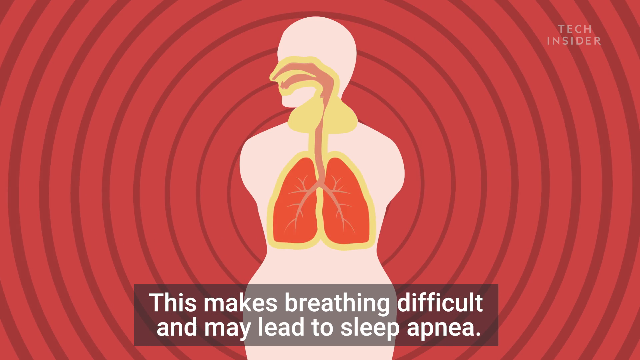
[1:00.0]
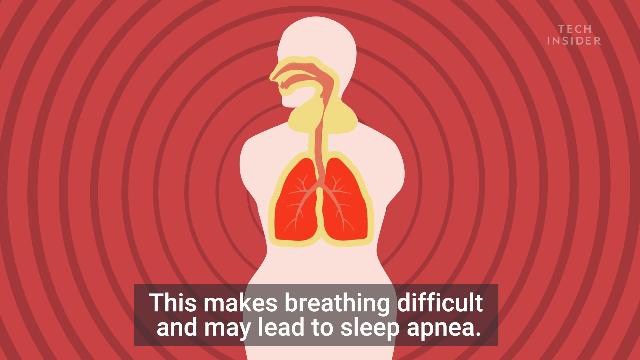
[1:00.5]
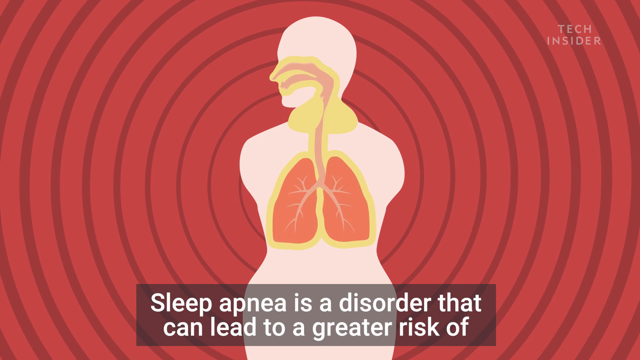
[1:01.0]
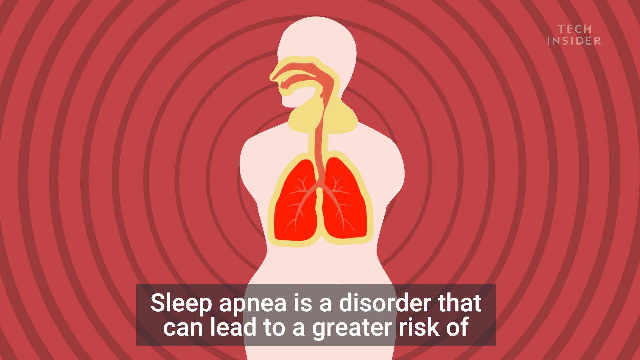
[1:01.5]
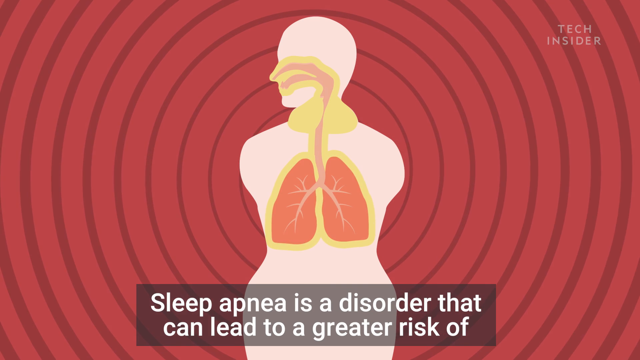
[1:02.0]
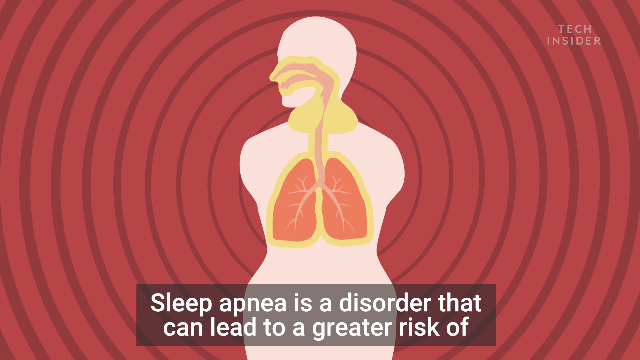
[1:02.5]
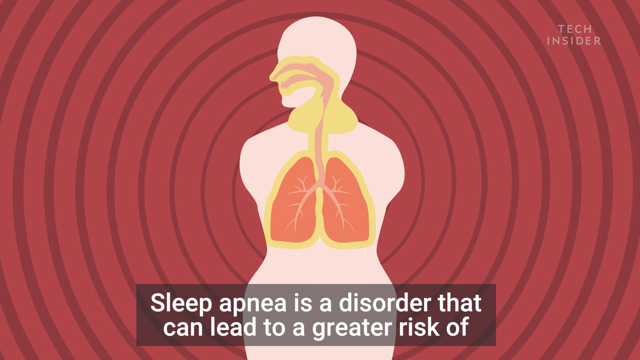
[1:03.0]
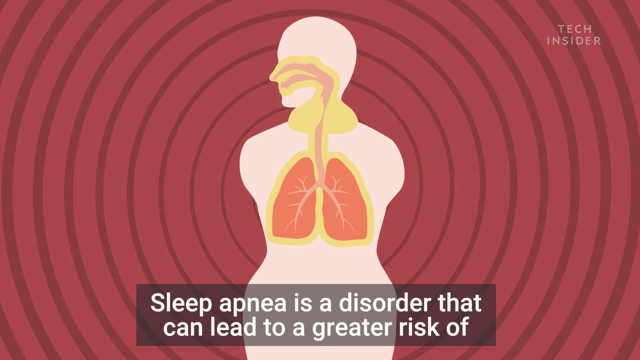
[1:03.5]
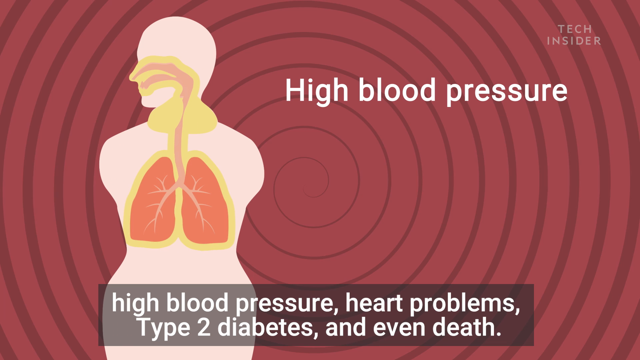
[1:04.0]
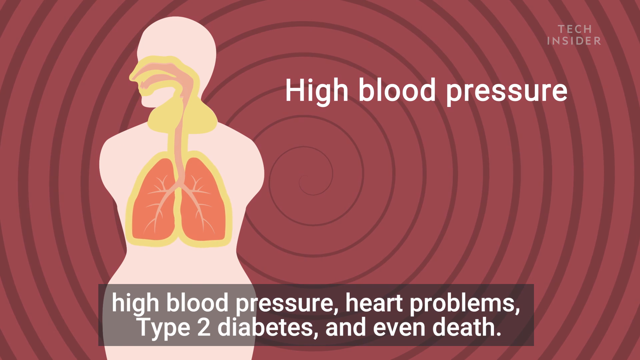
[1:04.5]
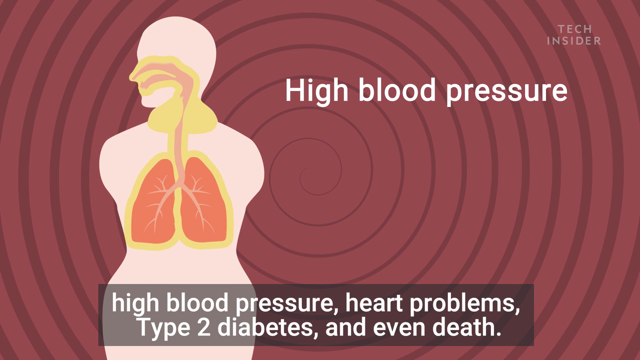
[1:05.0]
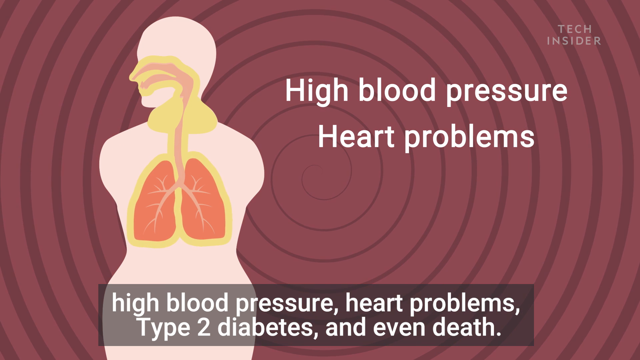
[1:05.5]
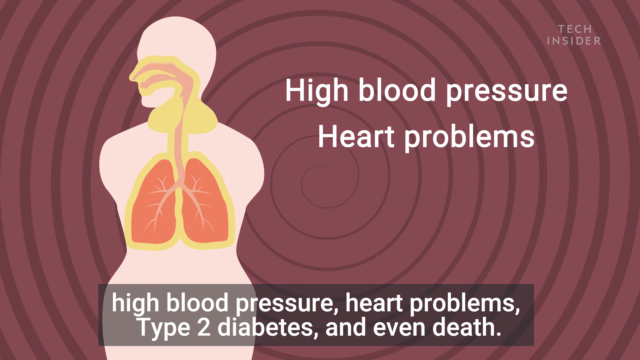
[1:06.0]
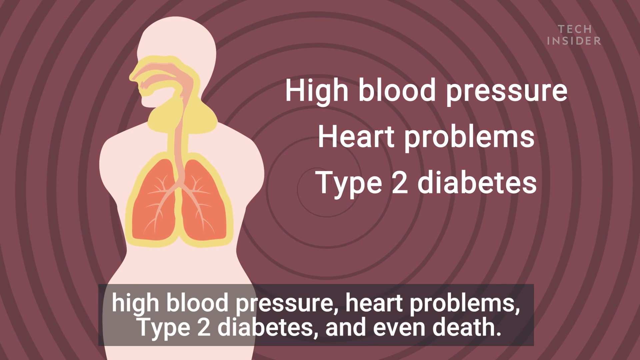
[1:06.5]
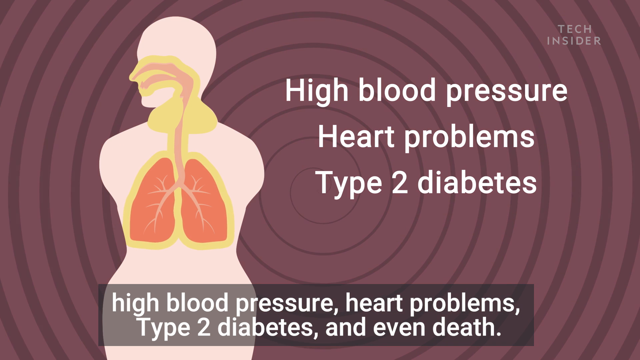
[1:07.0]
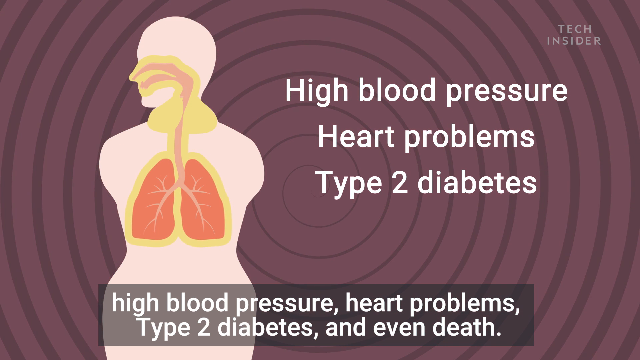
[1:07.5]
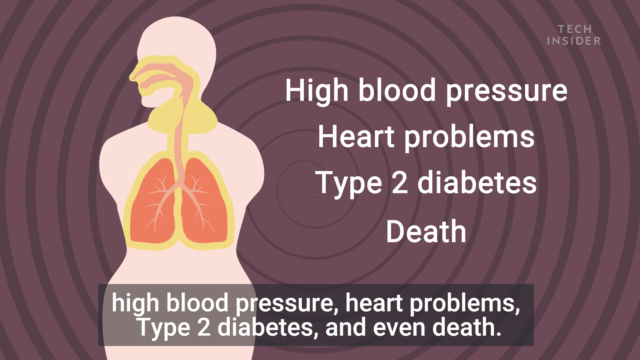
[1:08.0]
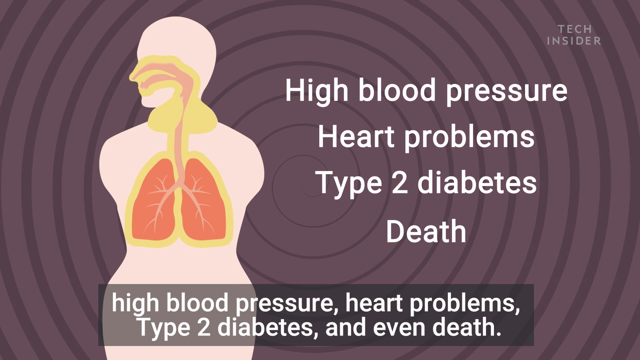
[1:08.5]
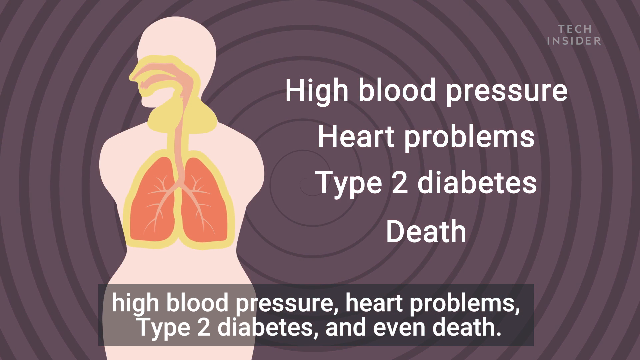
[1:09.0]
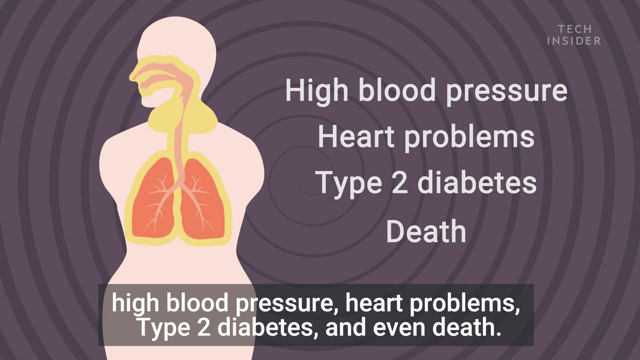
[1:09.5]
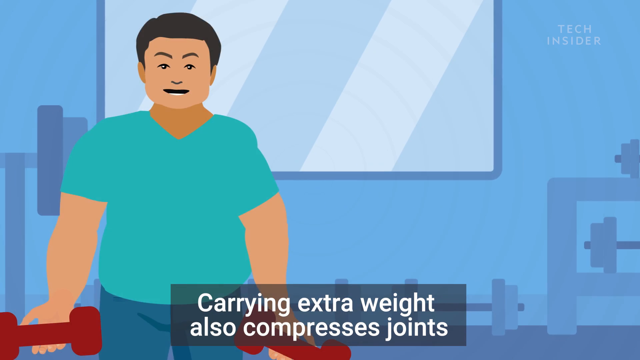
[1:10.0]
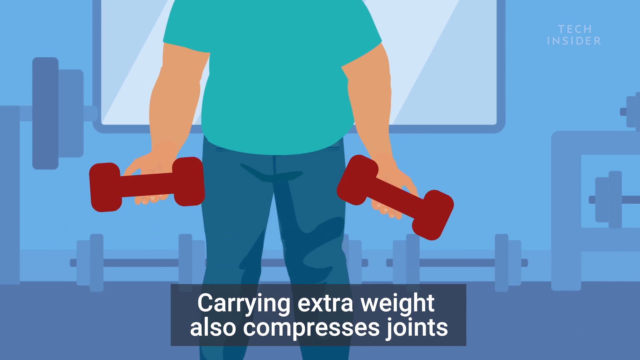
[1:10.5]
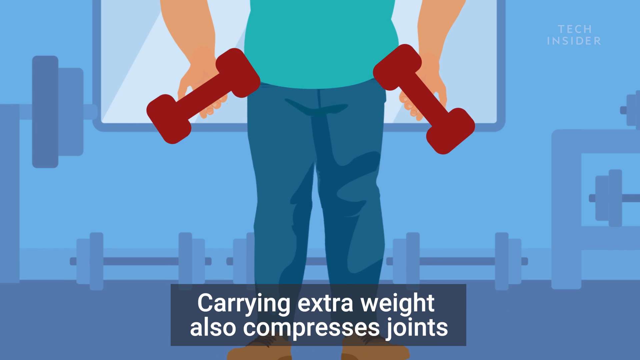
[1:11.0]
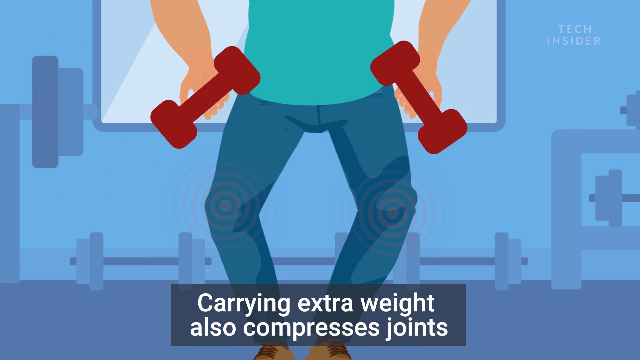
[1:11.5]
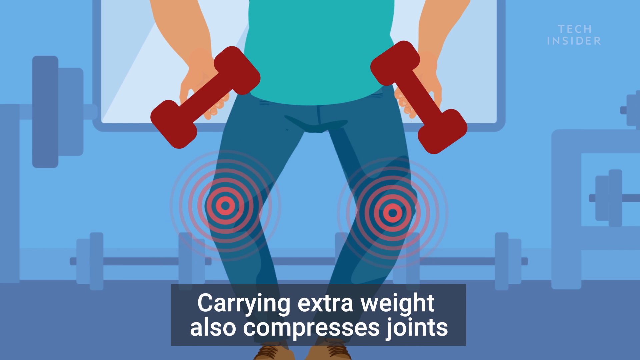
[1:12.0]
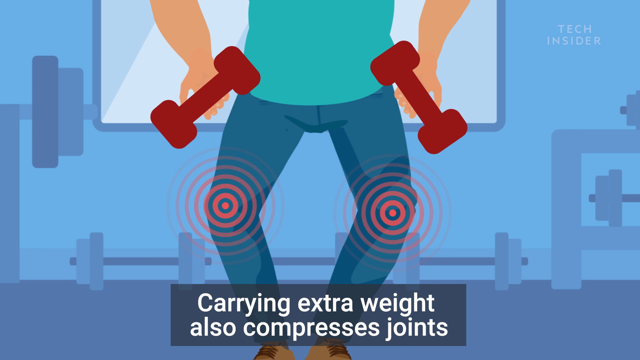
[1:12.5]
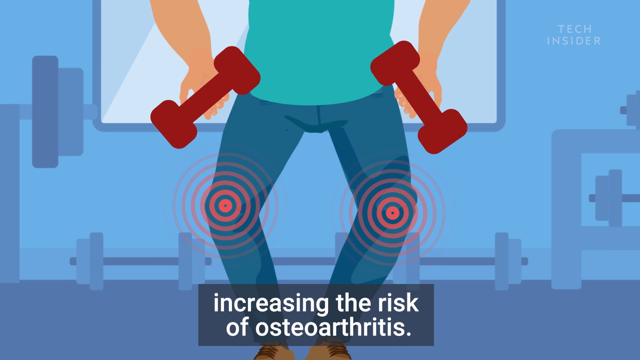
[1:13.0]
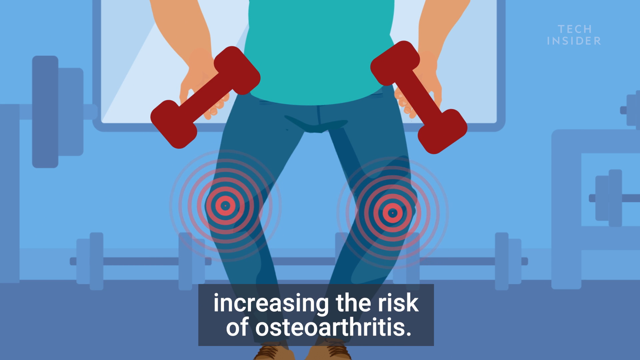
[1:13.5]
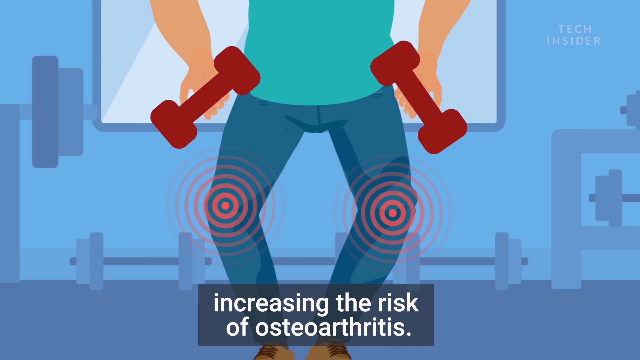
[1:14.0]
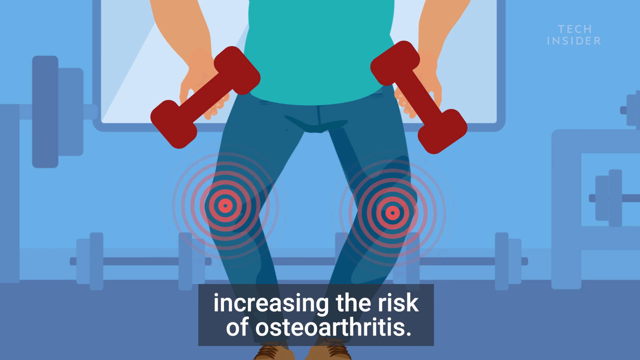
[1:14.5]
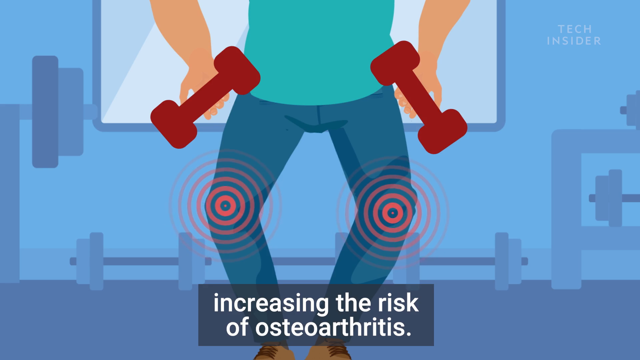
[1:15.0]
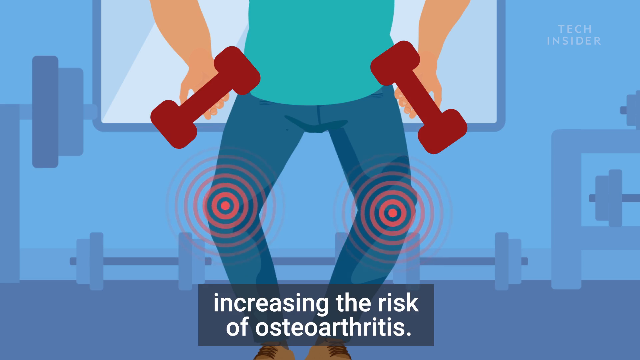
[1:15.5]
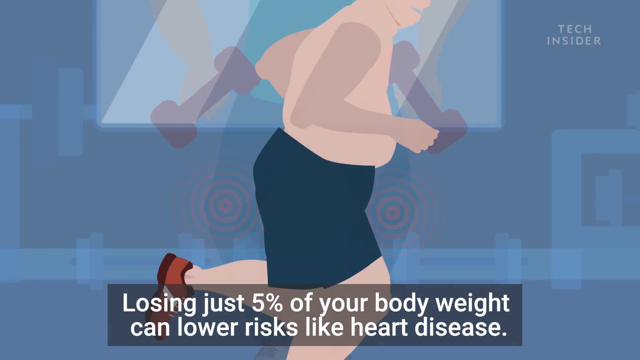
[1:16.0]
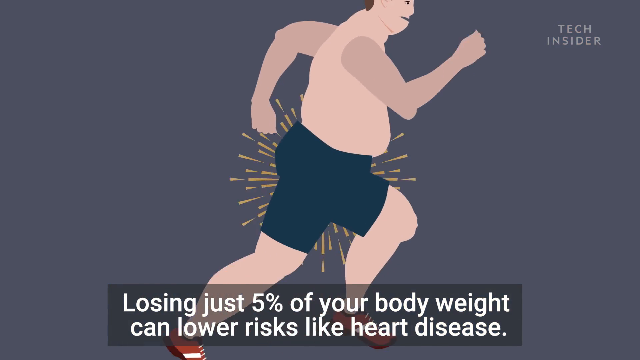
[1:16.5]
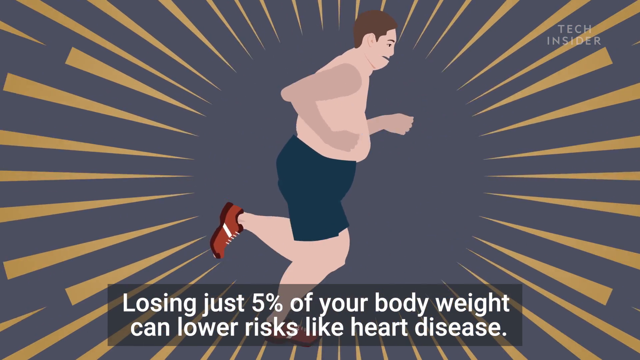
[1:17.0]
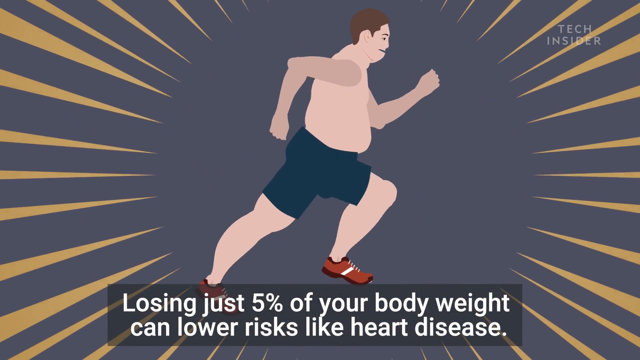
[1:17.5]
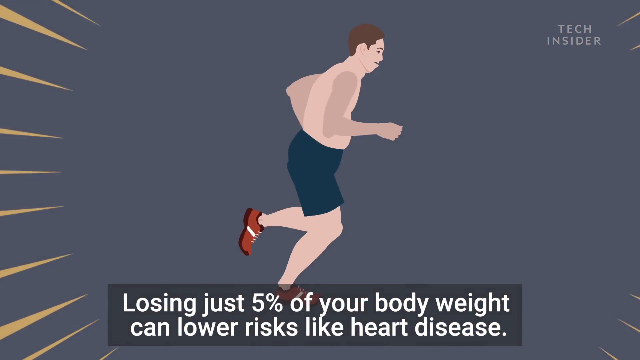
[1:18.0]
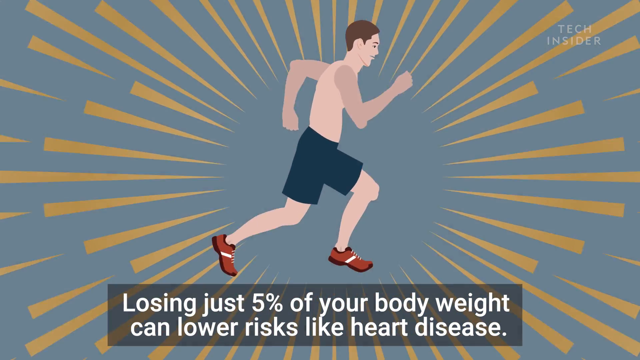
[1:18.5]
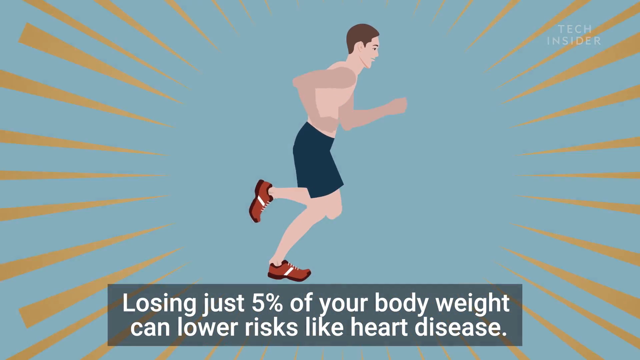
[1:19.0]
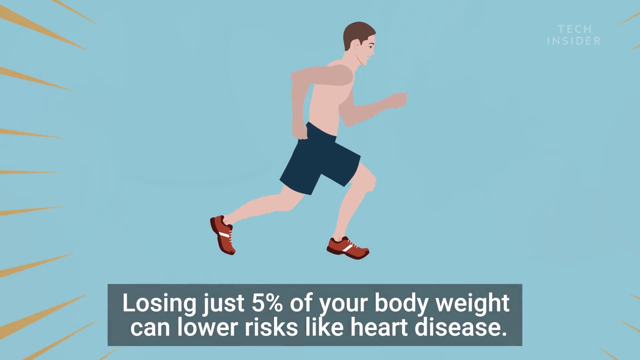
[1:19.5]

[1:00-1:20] The lungs are shown not receiving enough air because of a lump of yellow fat on the person's neck, and the text underneath reads "sleep apnea is a disorder that can lead to a greater risk of high blood pressure, heart problems, type 2 diabetes, and even death." The cross-section of the body moves slightly to the left, and text highlighted on the right side of the screen says "high blood pressure," "heart problems," "type 2 diabetes," "death." The background turns dark gray. A new shot shows the man carrying a free weight in each hand, with the text "carrying extra weight also compresses joints"; two red circles throb out of his knees as the text reads "increasing the risk of osteoarthritis." The next screen shows a man running, wearing only dark blue shorts, with the text "losing just 5% of your body weight can lower risks like heart disease." As he runs, he gradually loses weight until he is leaner.